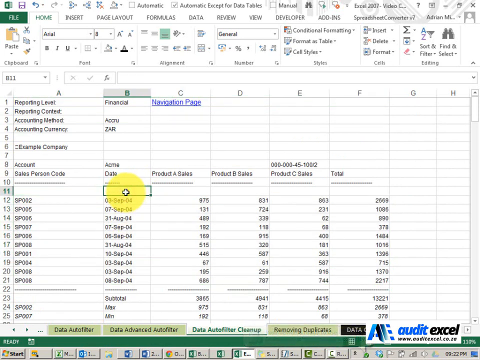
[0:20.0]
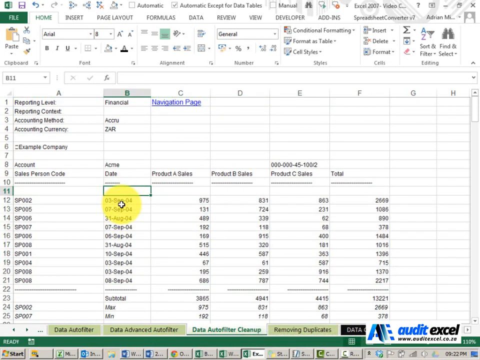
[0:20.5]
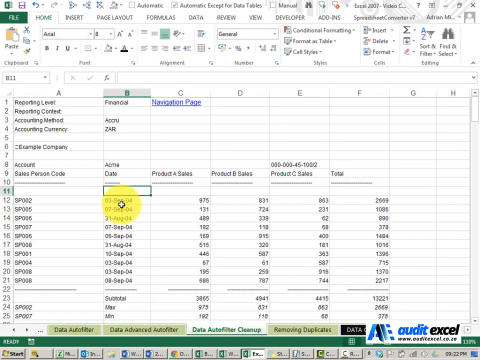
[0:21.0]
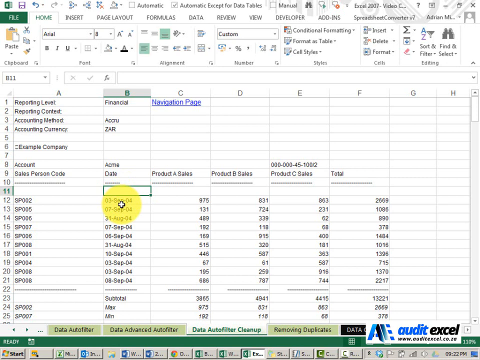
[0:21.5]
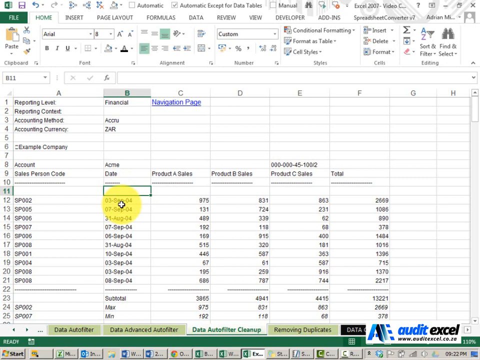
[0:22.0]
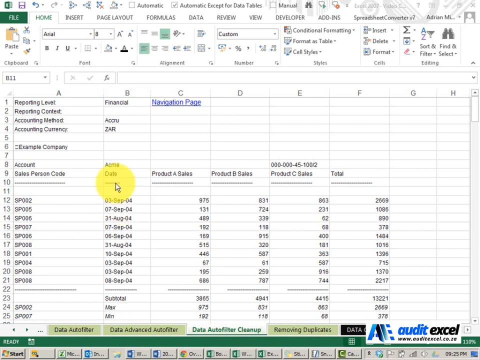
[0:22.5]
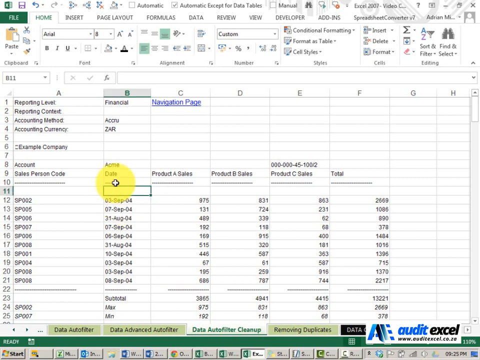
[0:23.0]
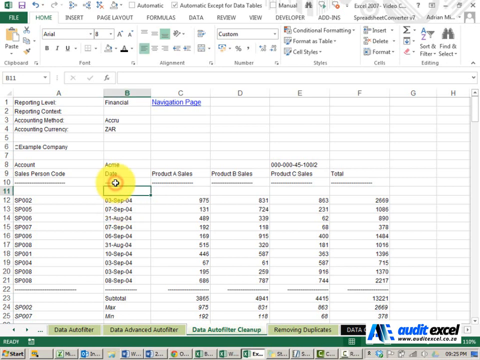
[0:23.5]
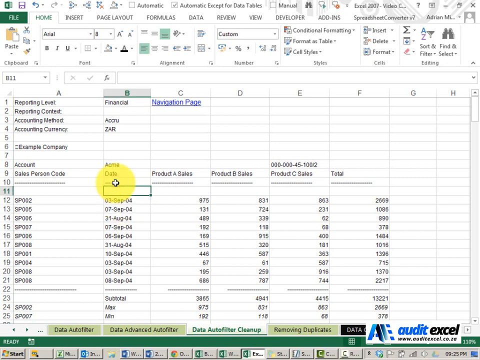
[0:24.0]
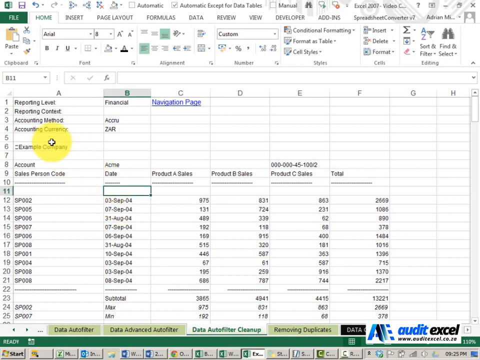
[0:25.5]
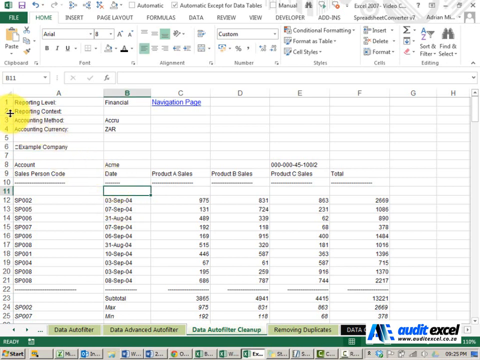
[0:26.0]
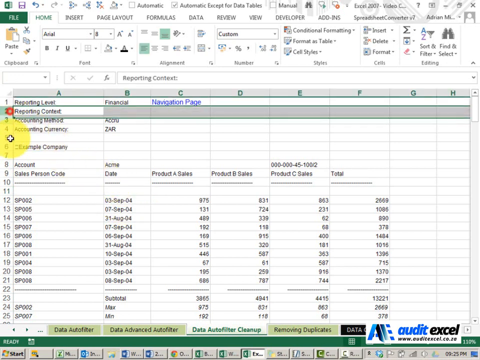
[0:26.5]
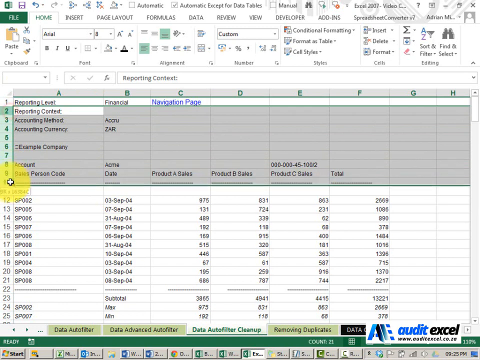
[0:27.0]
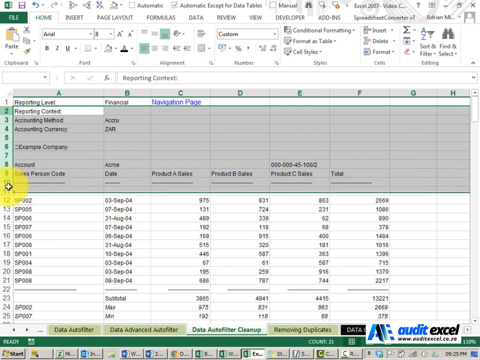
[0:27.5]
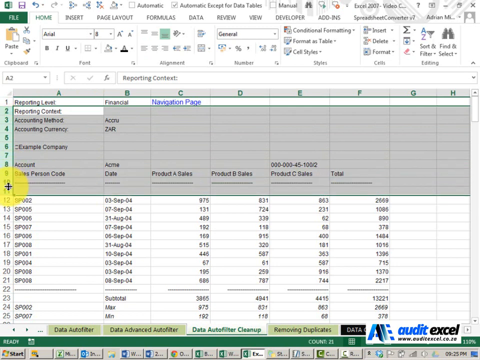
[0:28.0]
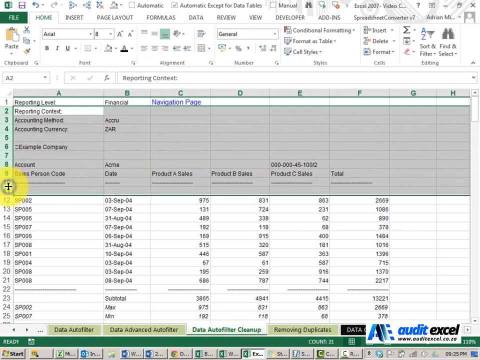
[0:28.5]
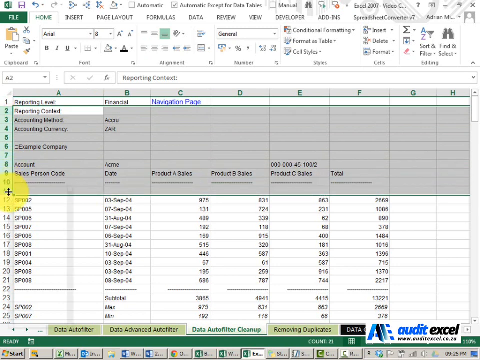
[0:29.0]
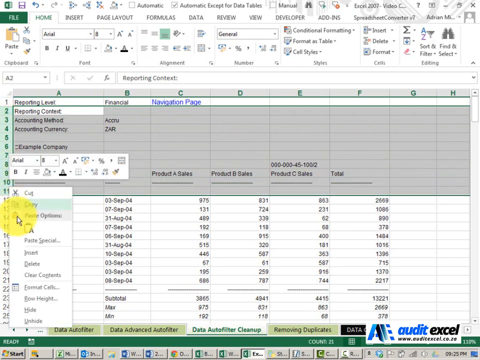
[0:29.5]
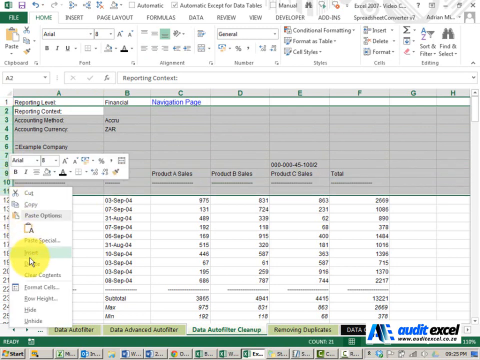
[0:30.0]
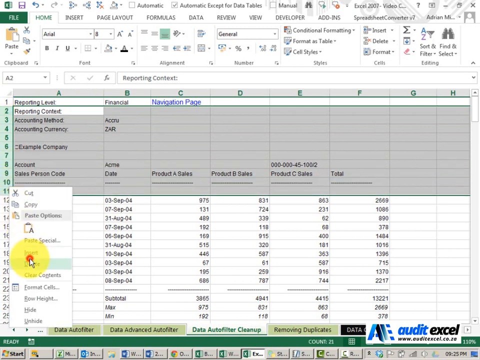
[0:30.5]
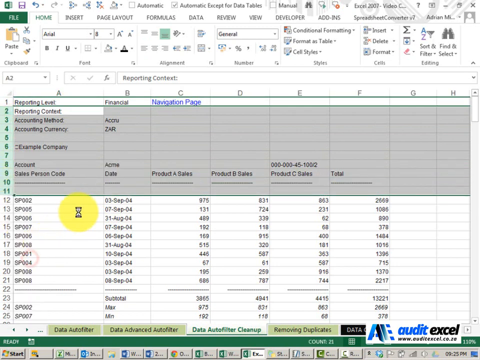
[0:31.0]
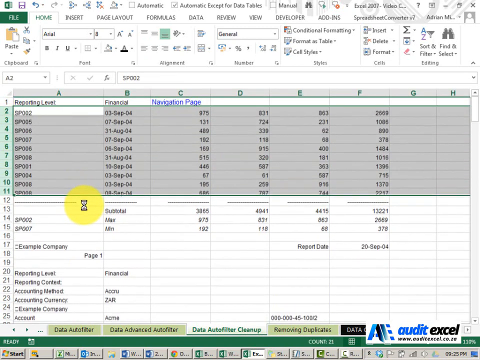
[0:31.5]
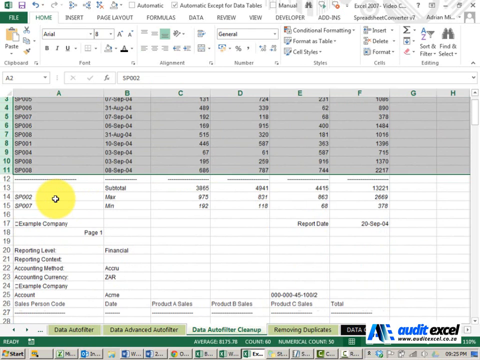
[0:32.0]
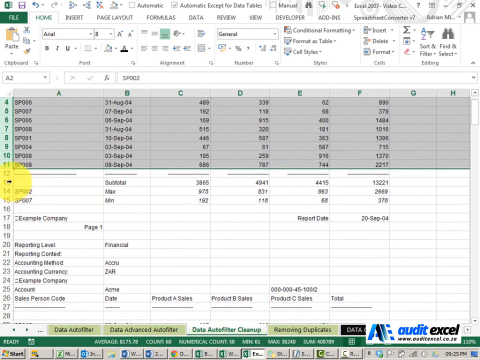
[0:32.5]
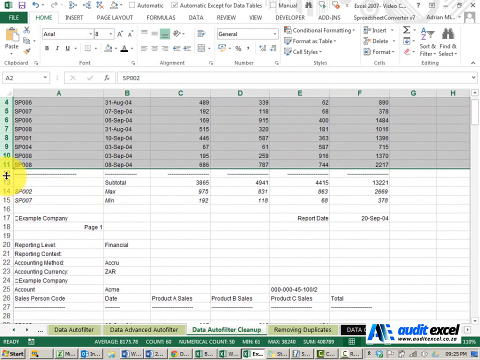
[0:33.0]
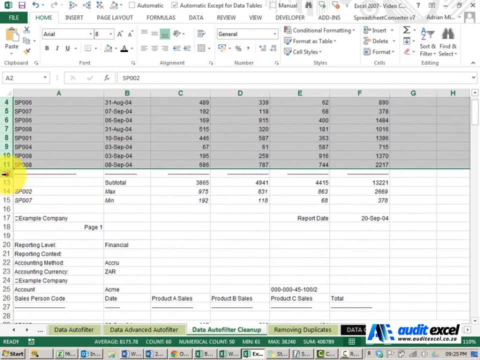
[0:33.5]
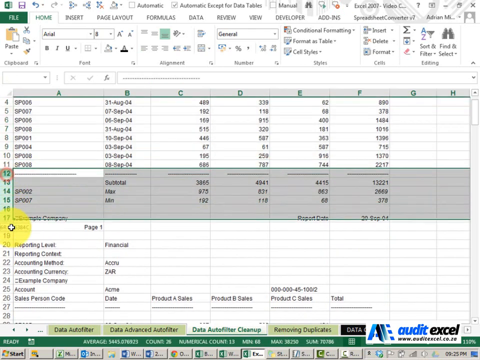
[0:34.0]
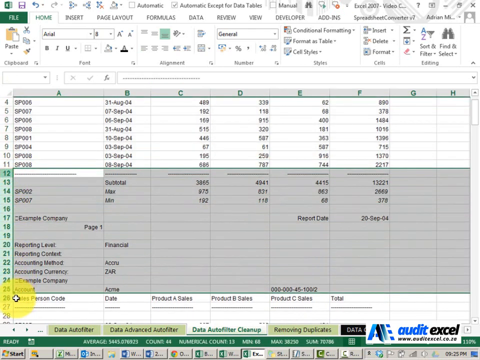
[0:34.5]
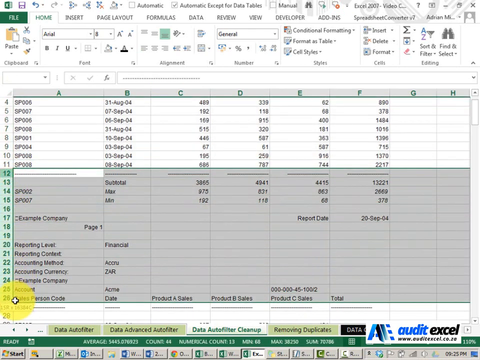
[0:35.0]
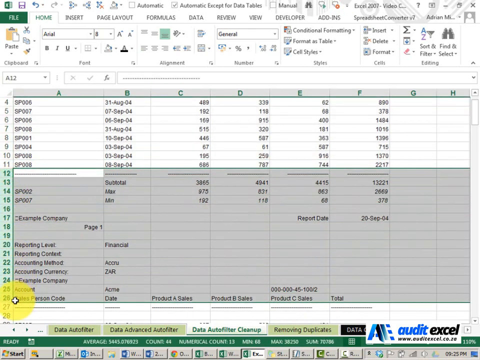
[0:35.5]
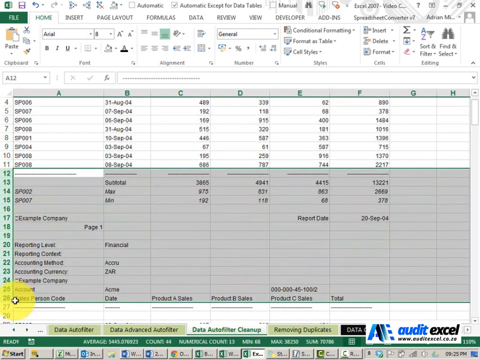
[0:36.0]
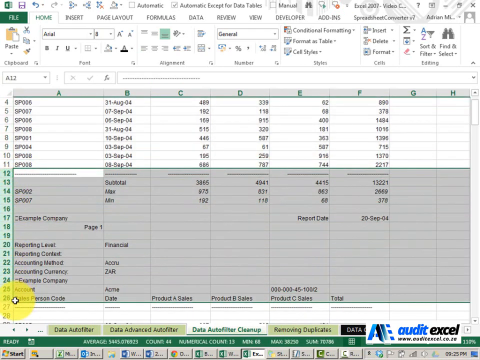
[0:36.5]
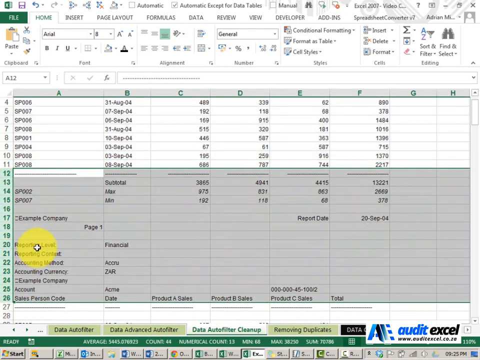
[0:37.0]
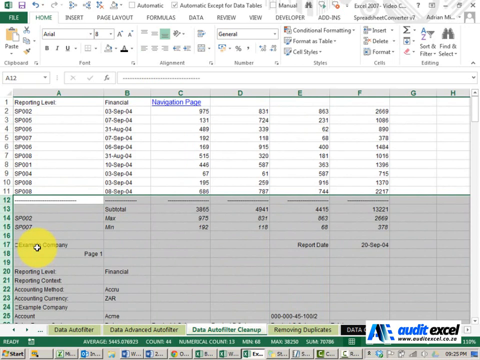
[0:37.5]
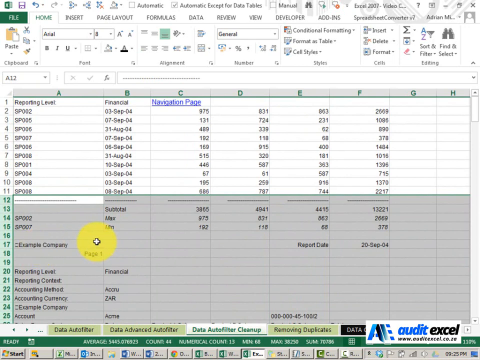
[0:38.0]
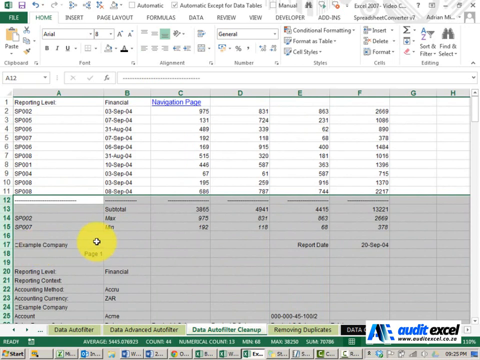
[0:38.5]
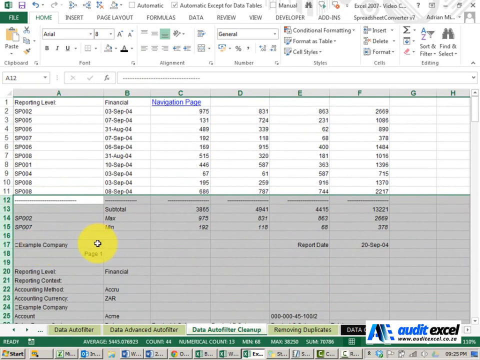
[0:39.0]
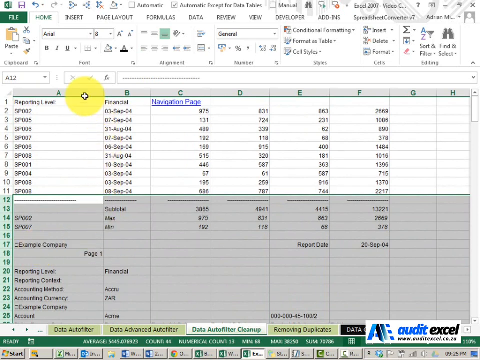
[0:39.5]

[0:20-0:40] The first salesperson's data is shown and the data is moved. All of the rows are copied, including reporting level, from reporting content down to salesperson one, and then deleted. Data is moved, and then the undo button is used. Certain data is moved, including salesperson codes SP002 and SP007, which identify salespeople by number. The spreadsheet appears to be some sort of audit document, apparently a tutorial for an Audit Excel spreadsheet.